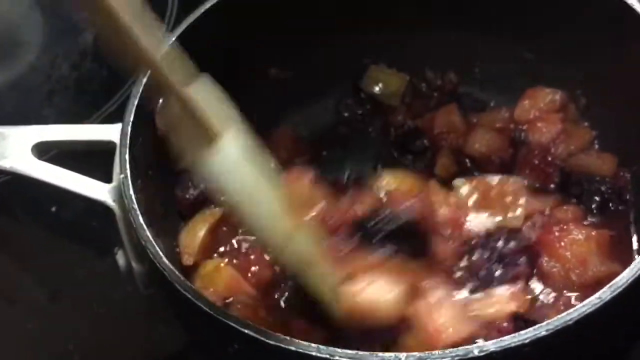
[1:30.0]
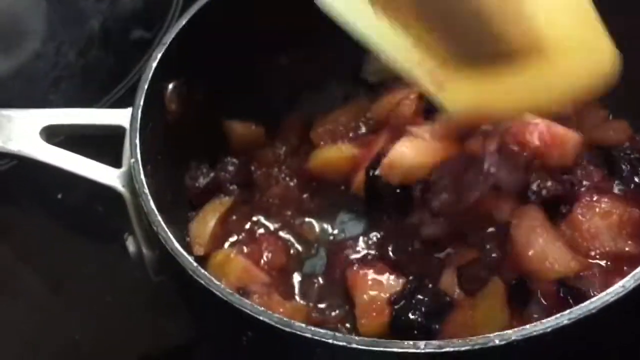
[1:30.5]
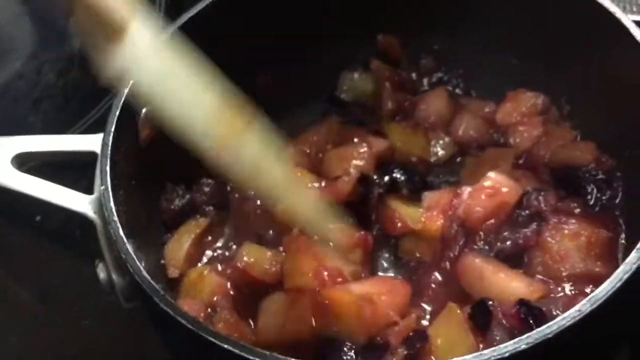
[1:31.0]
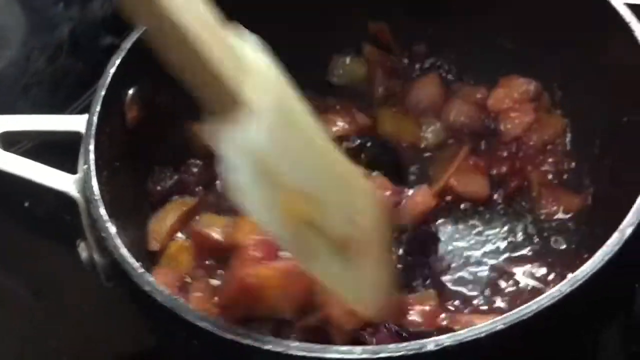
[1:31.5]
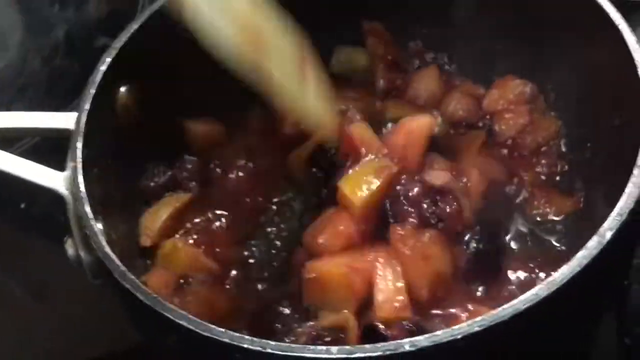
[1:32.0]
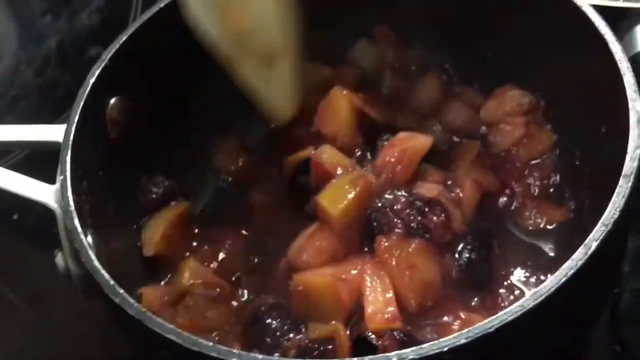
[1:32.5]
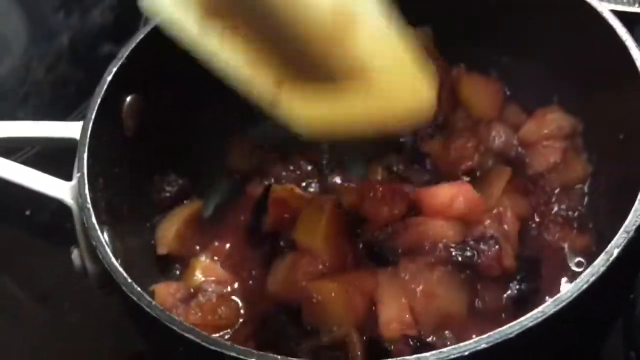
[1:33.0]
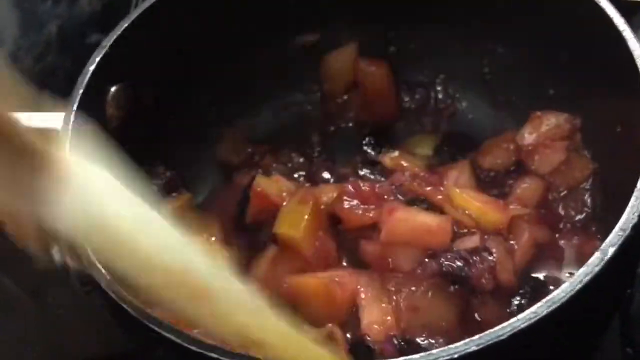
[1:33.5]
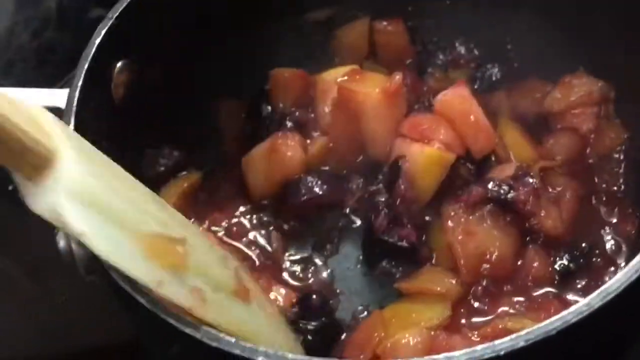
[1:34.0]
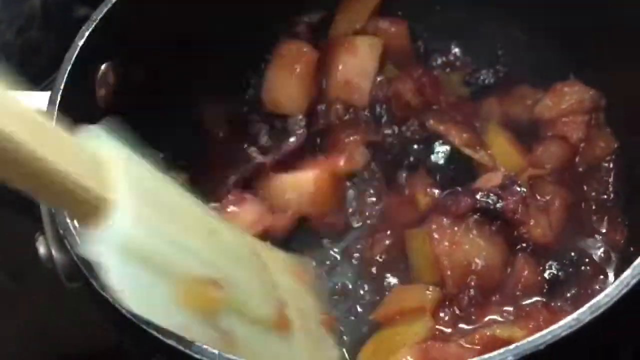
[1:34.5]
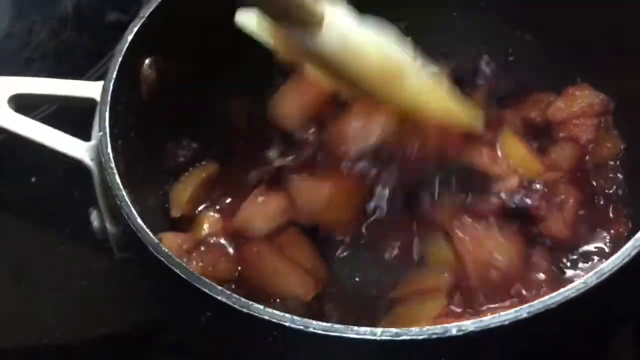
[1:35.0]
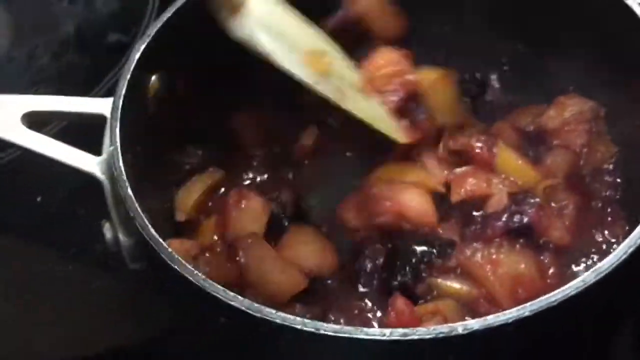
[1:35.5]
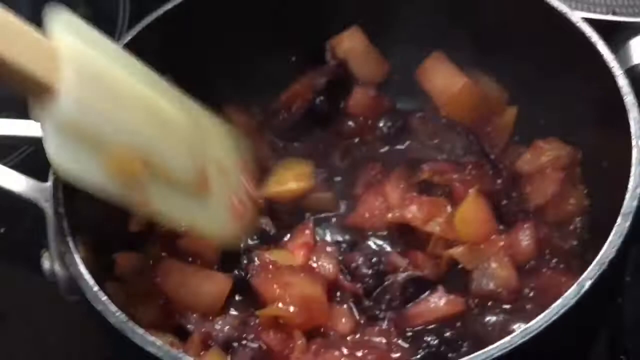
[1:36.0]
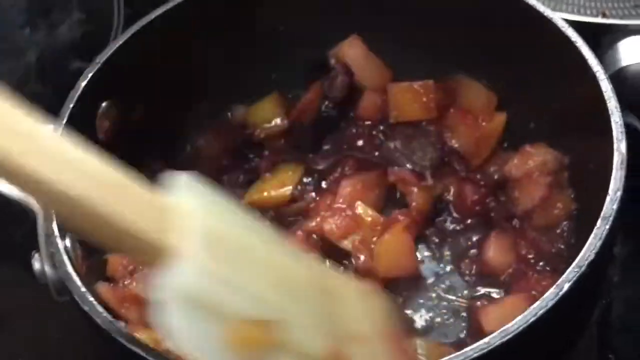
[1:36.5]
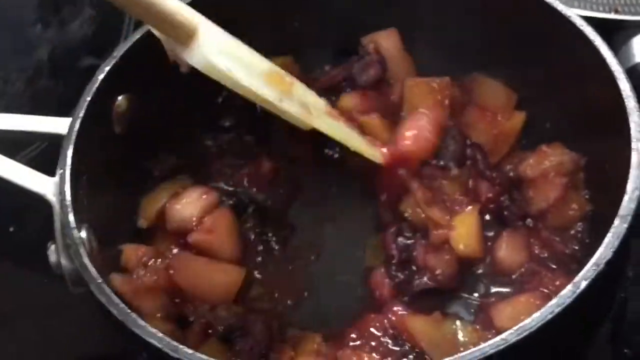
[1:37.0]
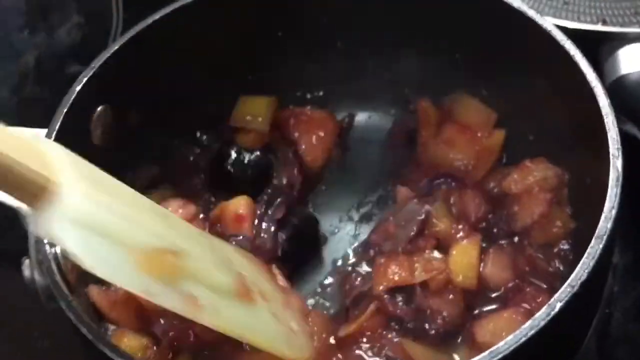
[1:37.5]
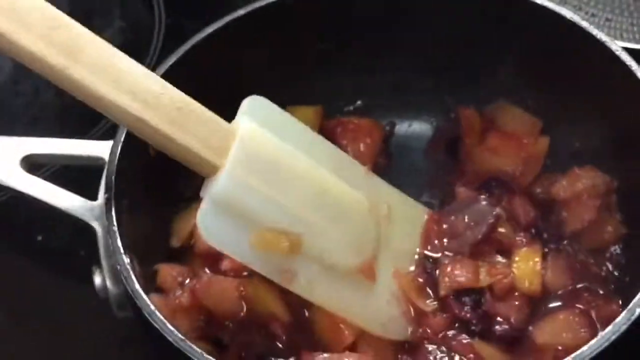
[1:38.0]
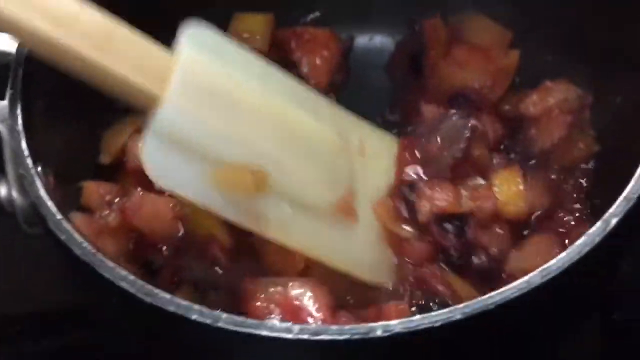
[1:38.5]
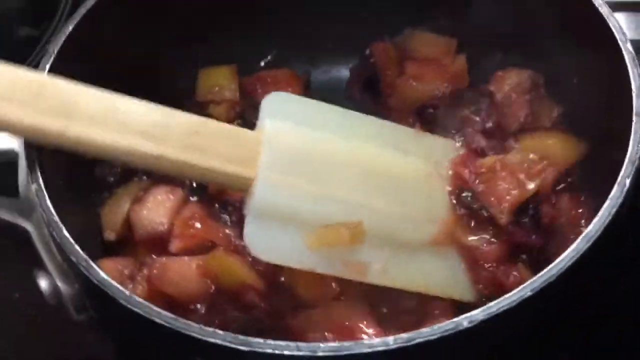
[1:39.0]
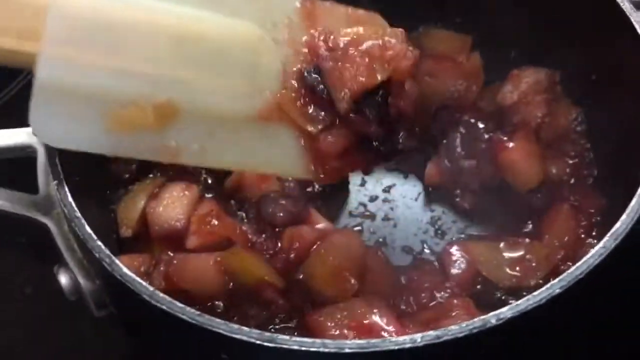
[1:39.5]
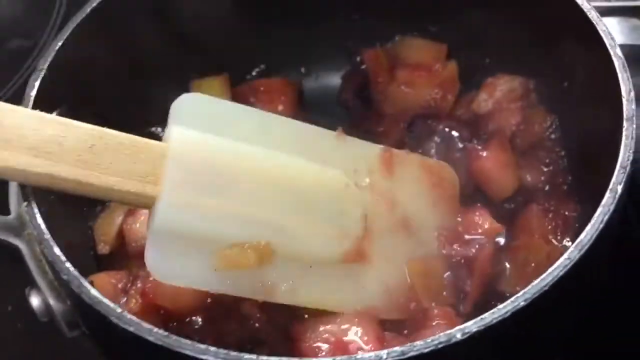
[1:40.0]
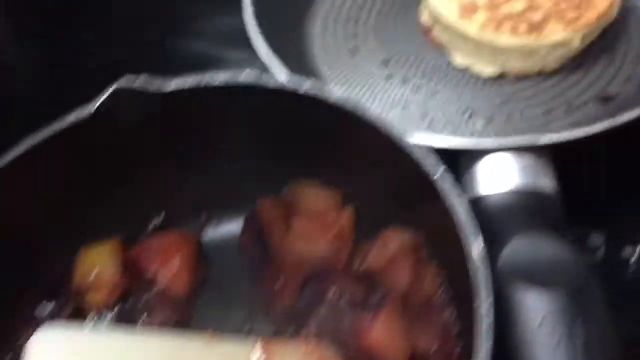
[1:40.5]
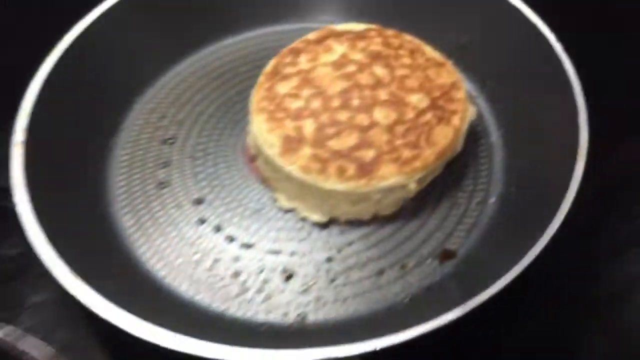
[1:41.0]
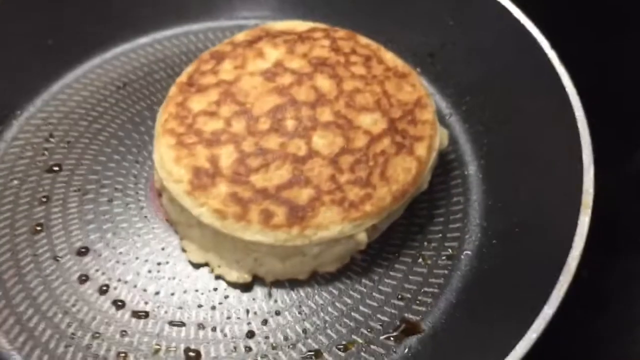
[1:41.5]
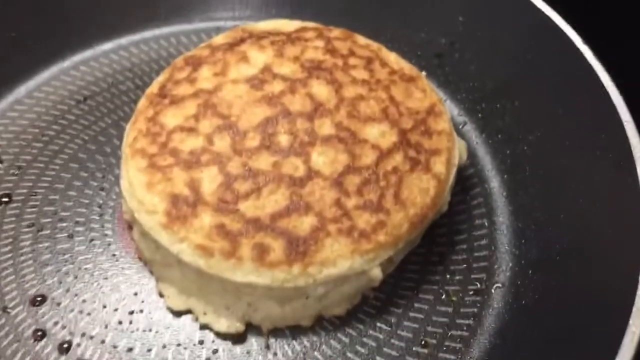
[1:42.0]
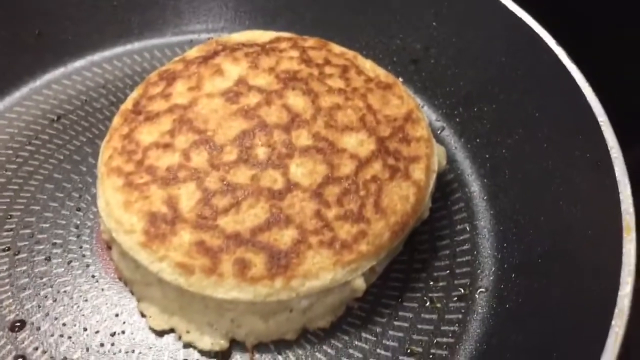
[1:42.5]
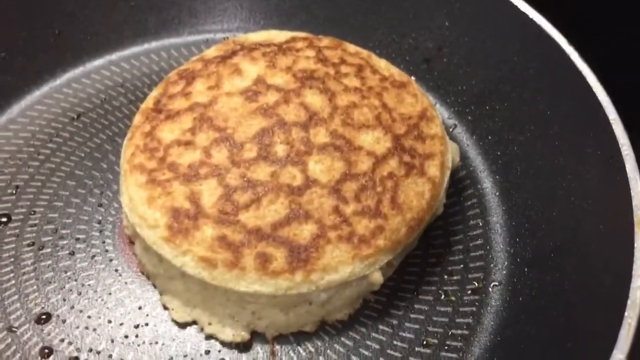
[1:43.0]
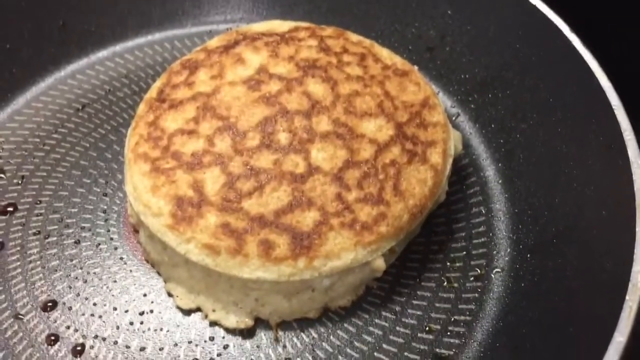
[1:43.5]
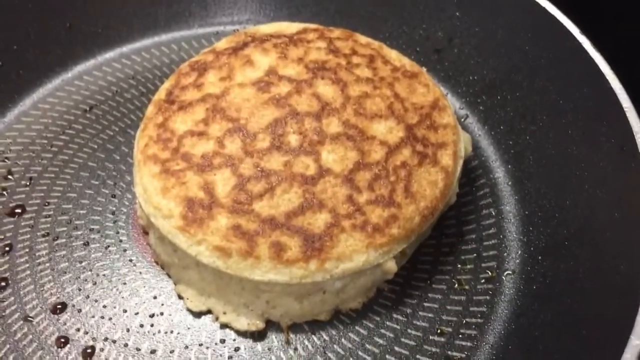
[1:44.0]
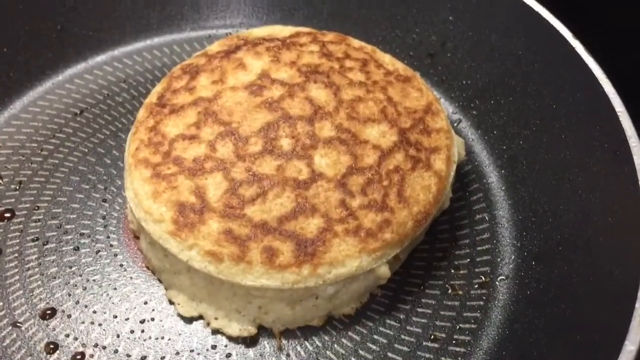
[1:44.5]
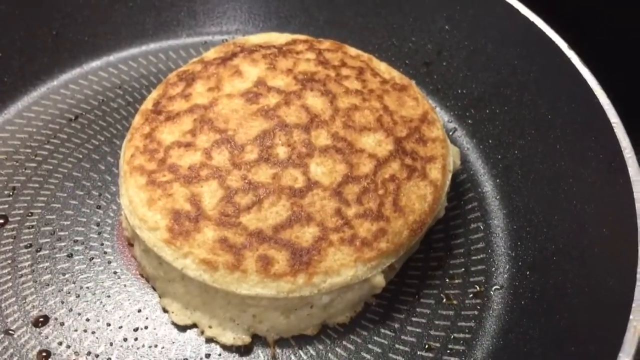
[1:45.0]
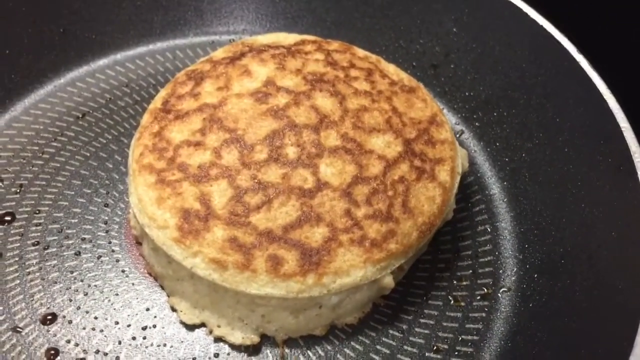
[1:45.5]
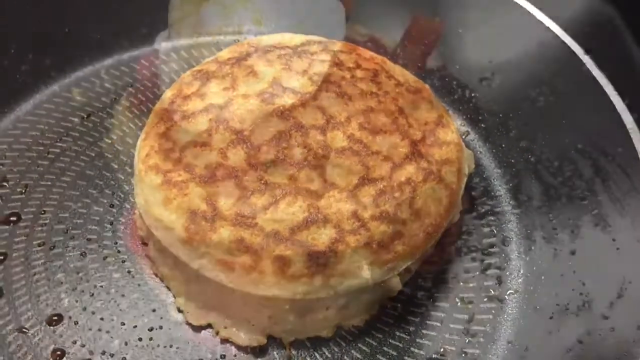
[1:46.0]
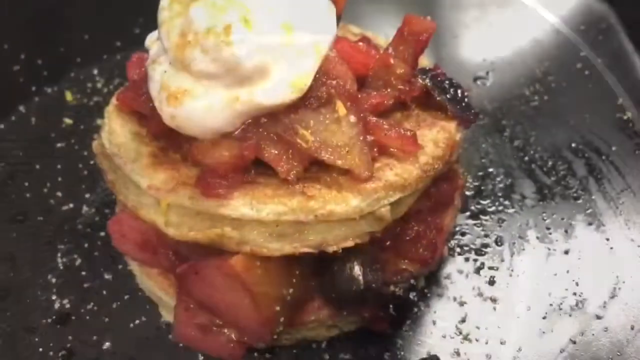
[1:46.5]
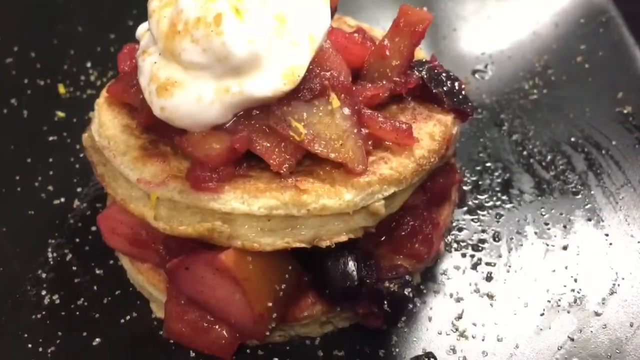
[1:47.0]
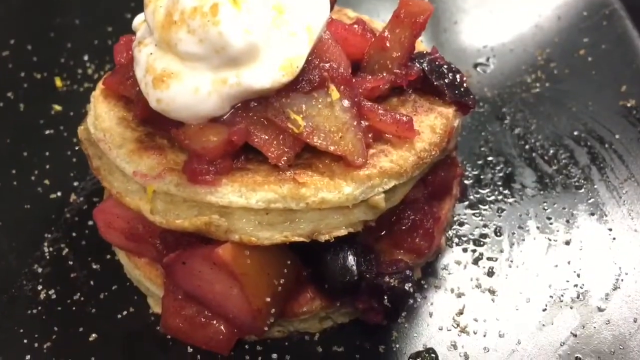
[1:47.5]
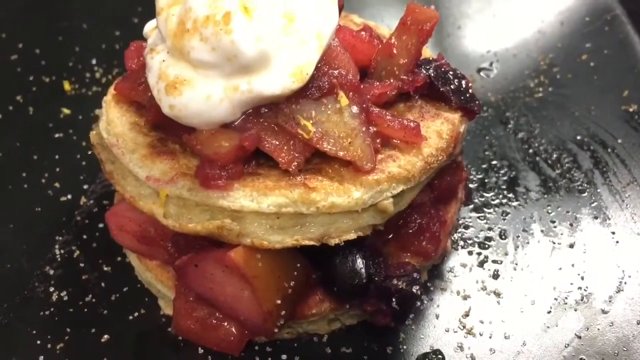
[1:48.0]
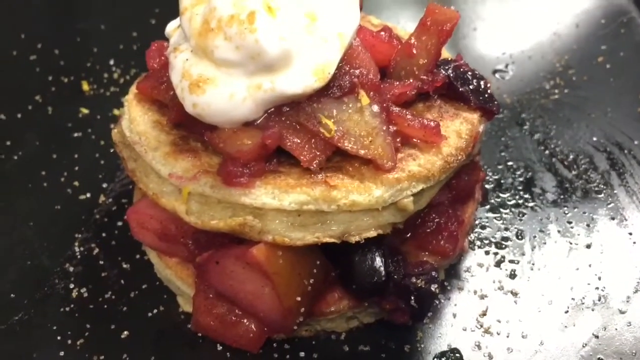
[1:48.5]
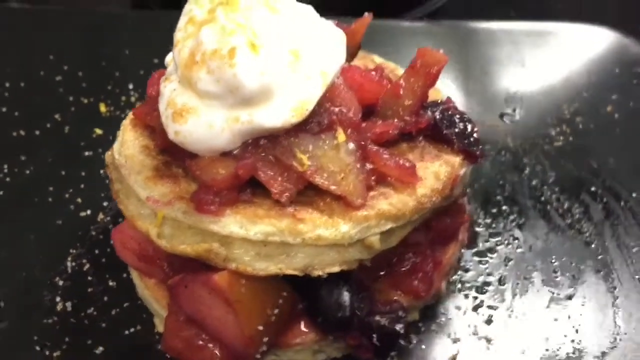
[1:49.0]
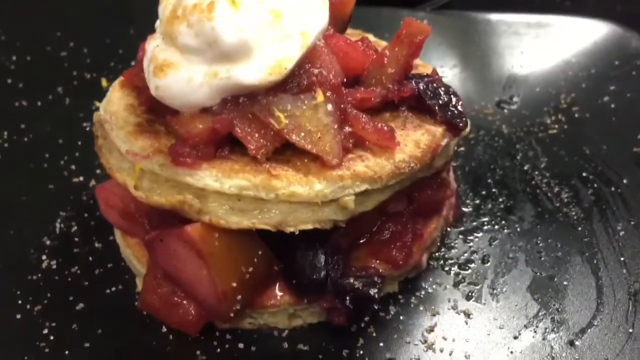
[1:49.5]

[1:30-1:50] A close-up shows a large black pot of fruit such as blueberries, peaches, strawberries and more, in what looks like a light caramelized sugar sauce, while a small white spatula lightly mixes the fruit as it cooks. The person places the ladle down on the side of the pot, kind of picks up a pile of fruit, and puts the ladle back down to rest on the side of the pot. The camera pans right to the large black round pan with a round yellow pancake with some brown markings on top, and zooms in on the pancake, which looks thick and fluffy. The scene changes to the finished dish: on a shiny black plate or table top, two pancakes are stacked on top of each other, with the fruit compote between the two slices and on top of the top slice. A dollop of white cream is on top, and some type of light brown seasoning is sprinkled on top as well as on the plate or table.